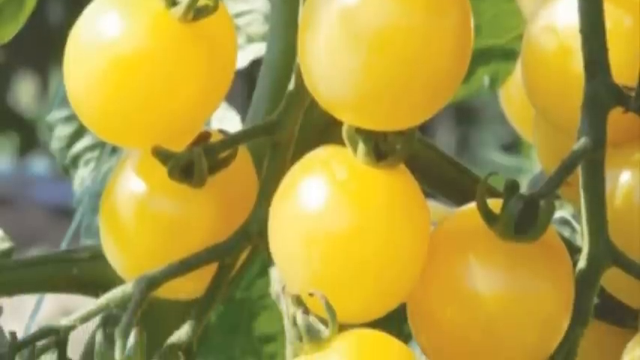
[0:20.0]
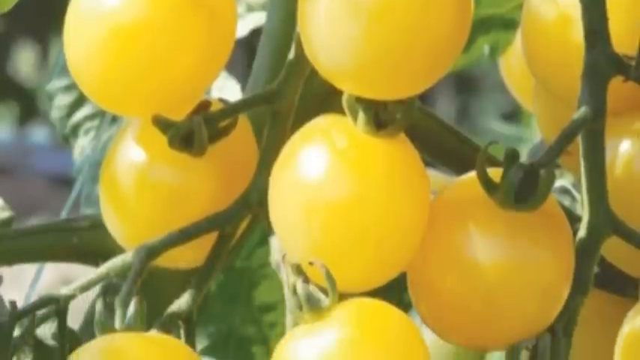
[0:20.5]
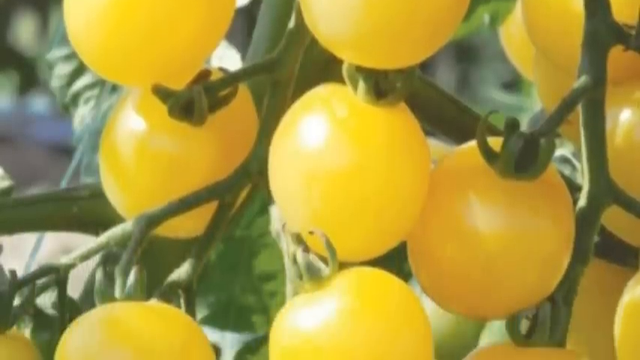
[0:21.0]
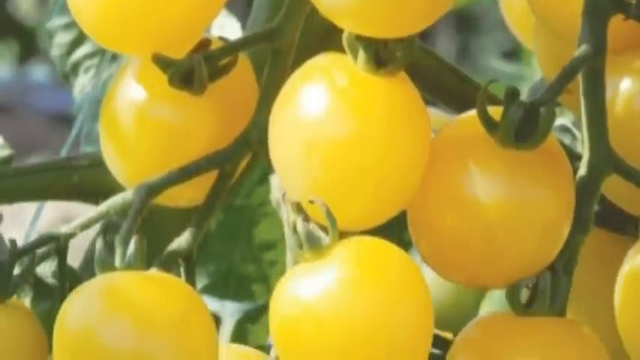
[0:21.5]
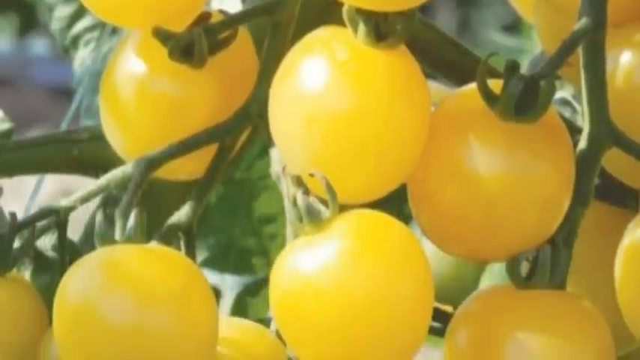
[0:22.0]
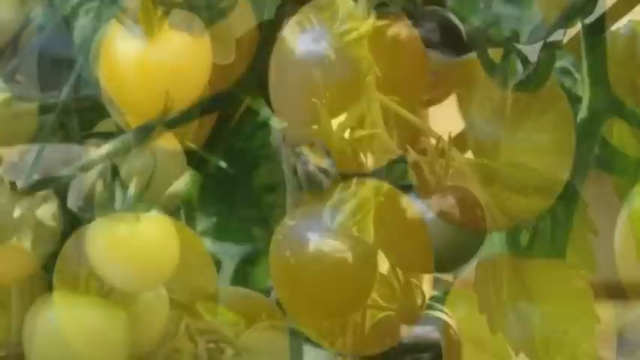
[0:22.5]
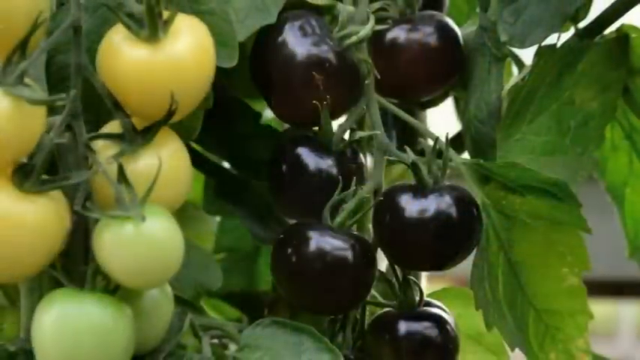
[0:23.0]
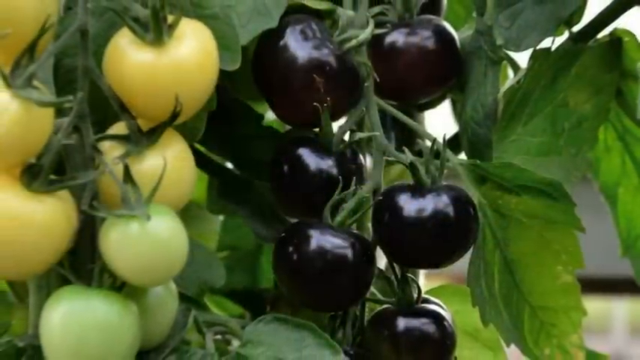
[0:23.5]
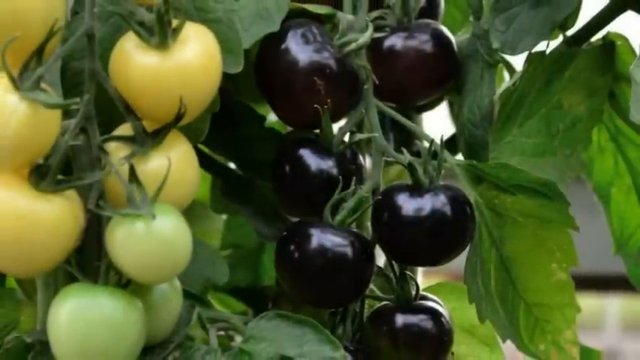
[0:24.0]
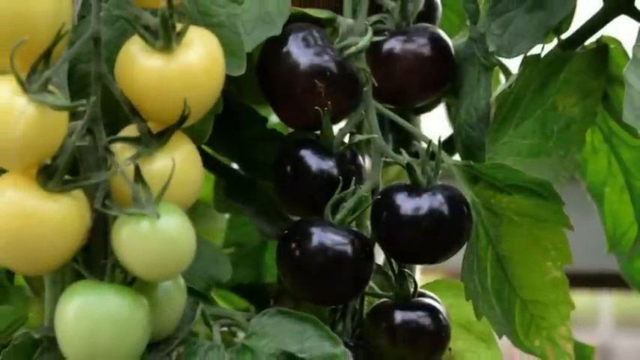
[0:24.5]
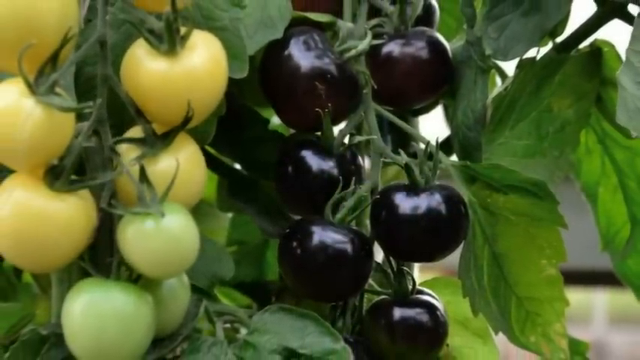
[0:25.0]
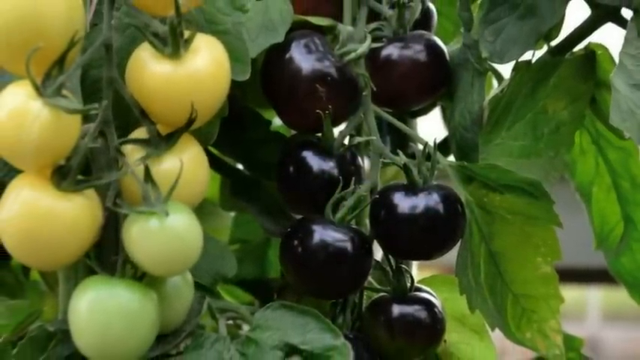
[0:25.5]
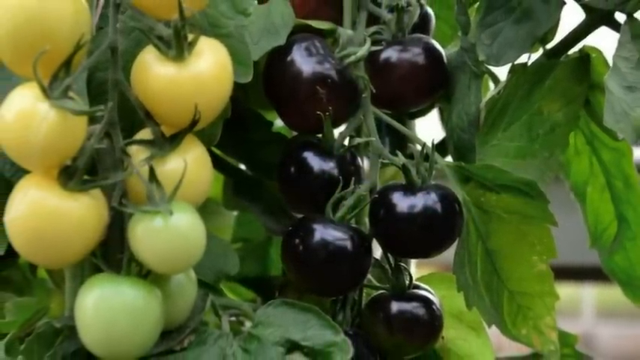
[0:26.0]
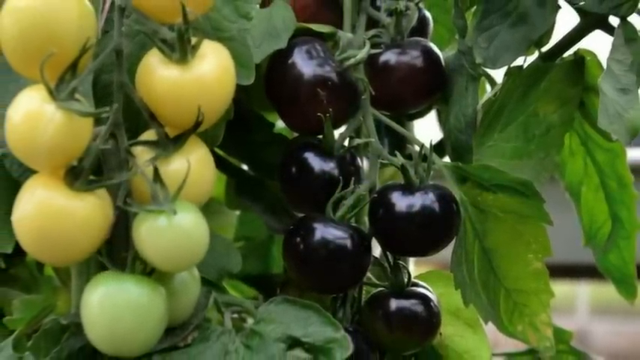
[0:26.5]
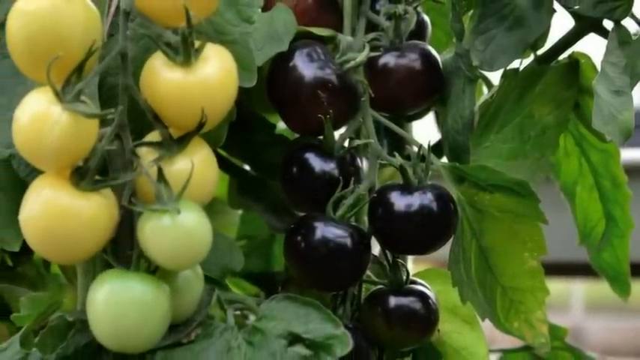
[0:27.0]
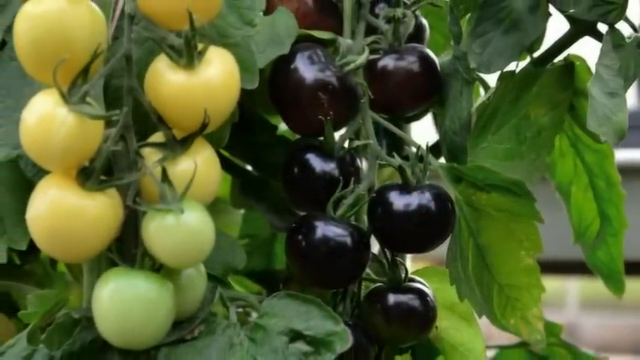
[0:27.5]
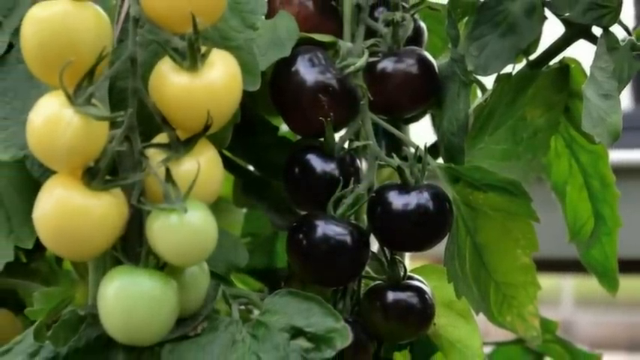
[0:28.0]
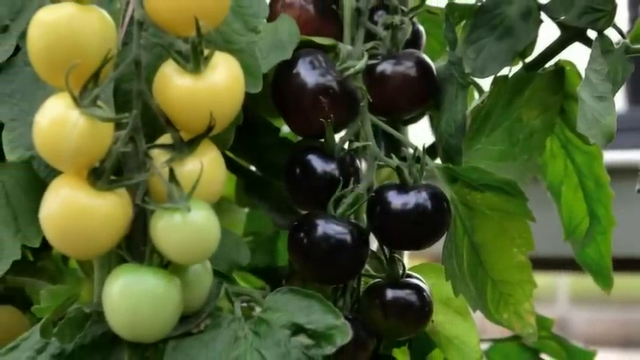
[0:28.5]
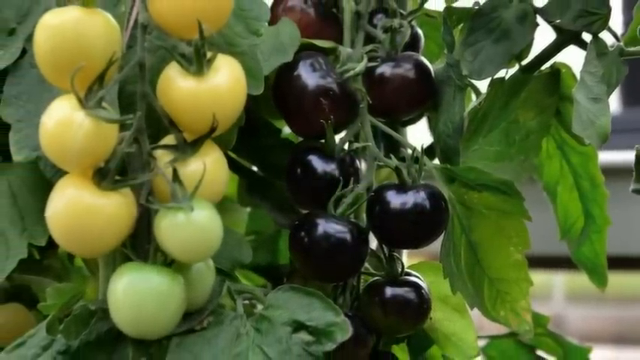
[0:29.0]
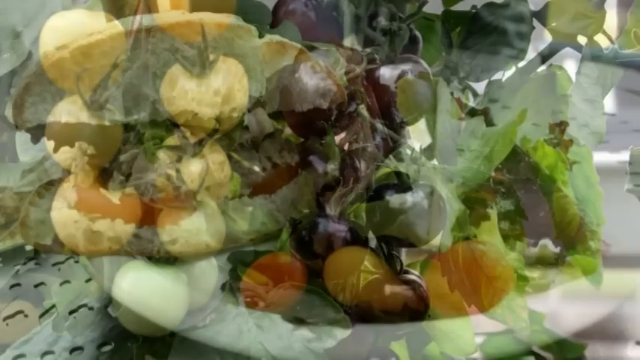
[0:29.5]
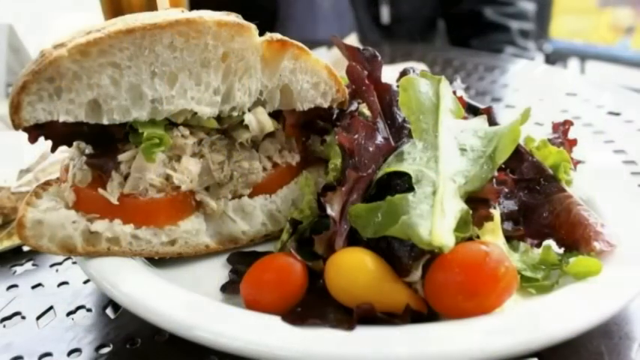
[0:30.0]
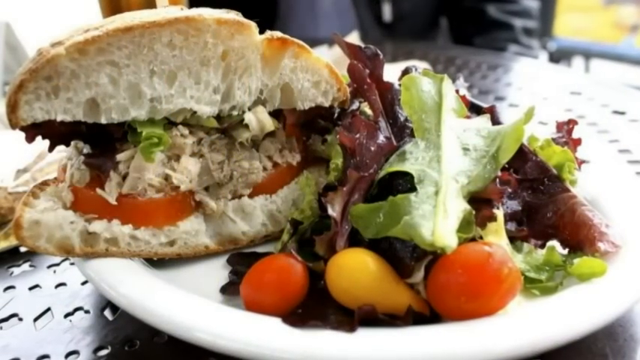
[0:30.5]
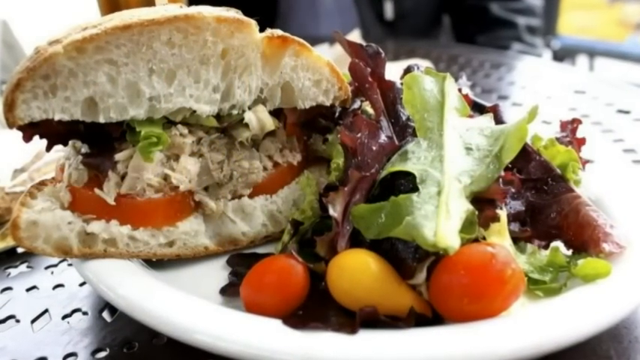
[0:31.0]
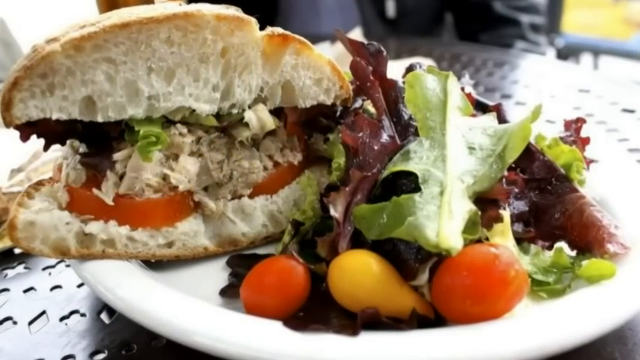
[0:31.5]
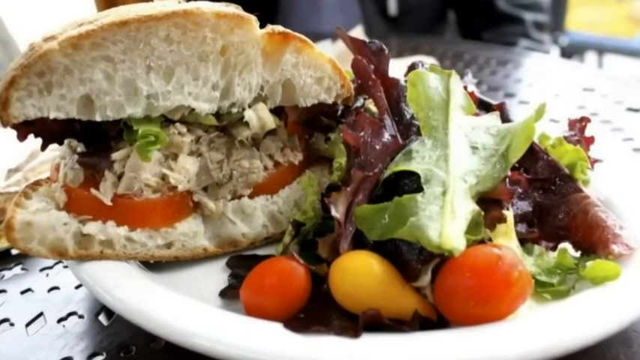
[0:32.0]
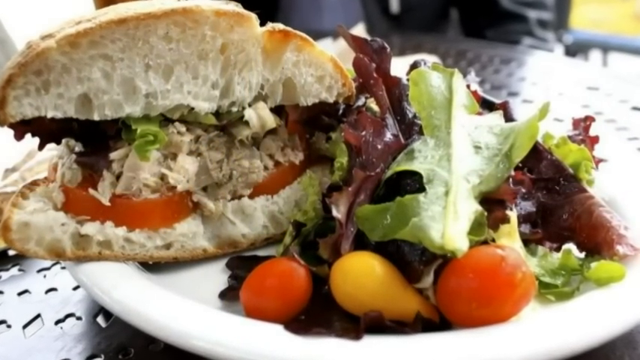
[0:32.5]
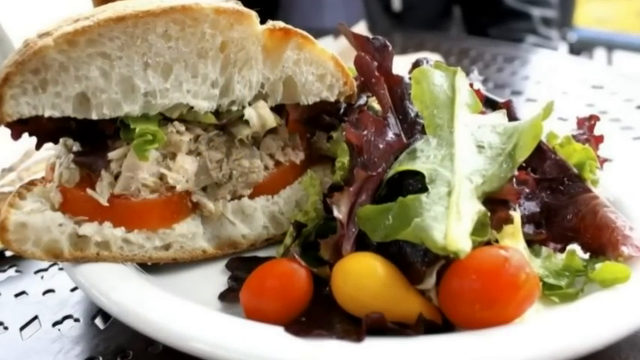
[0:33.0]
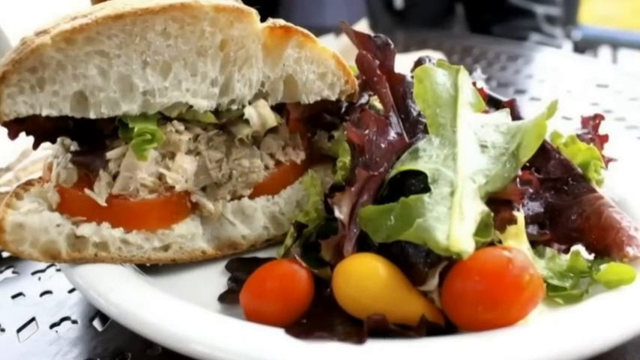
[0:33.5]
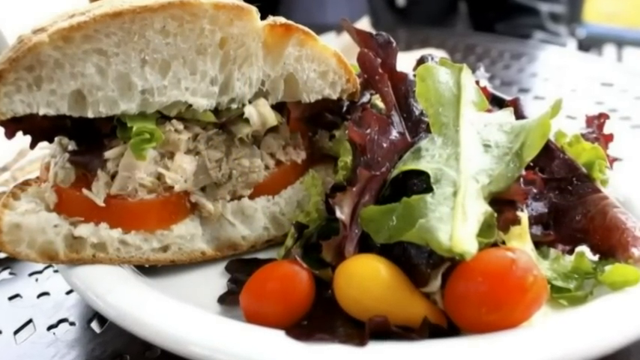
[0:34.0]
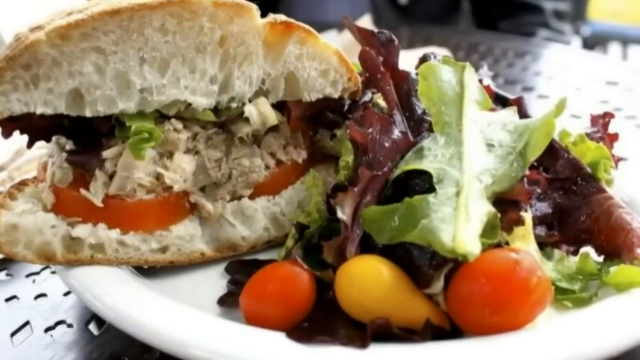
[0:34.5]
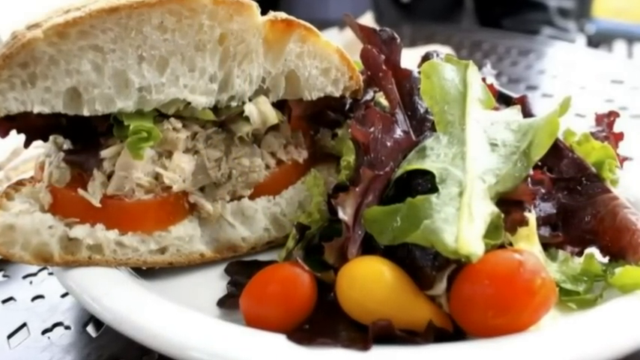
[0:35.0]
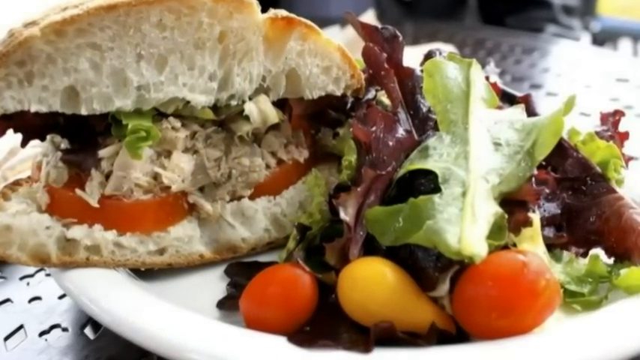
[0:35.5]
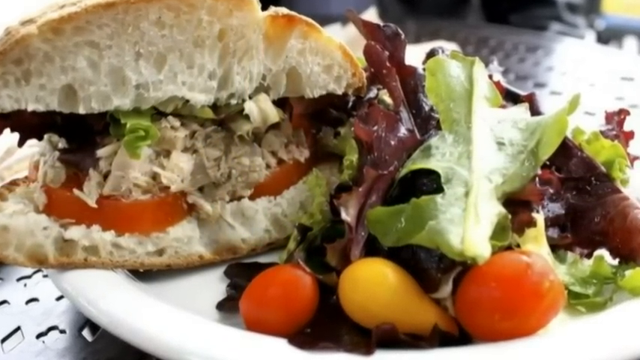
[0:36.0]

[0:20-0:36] Different types of tomatoes are shown, followed by the final product: the tomatoes cooked in food. The tomatoes look good and healthy, and spinach is also grown around the tomato plants.